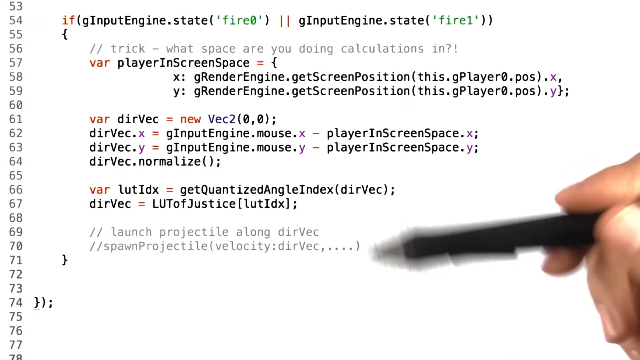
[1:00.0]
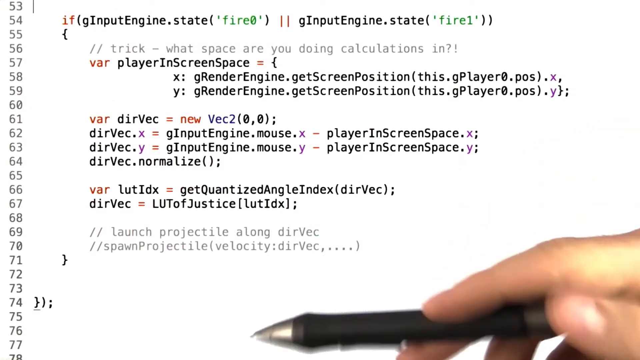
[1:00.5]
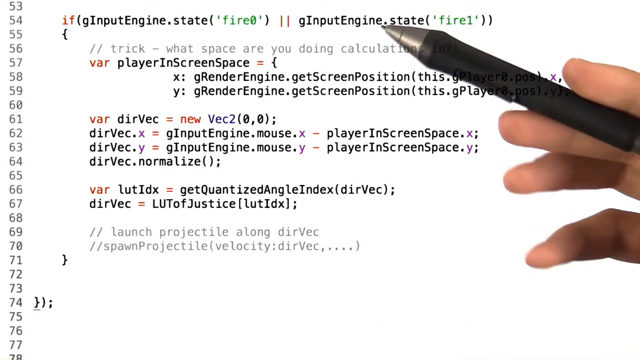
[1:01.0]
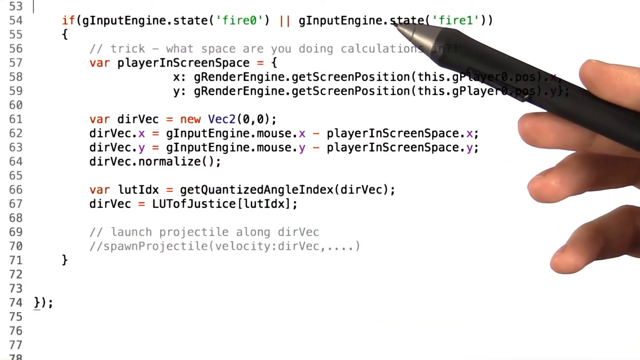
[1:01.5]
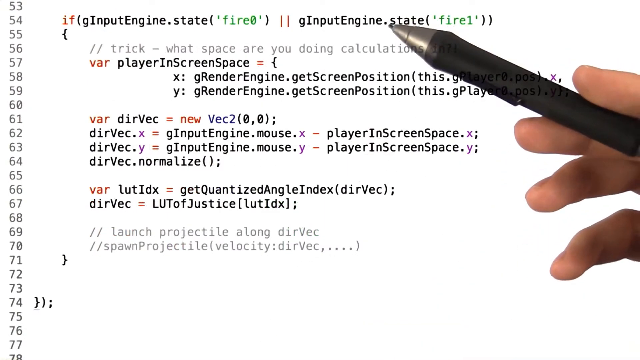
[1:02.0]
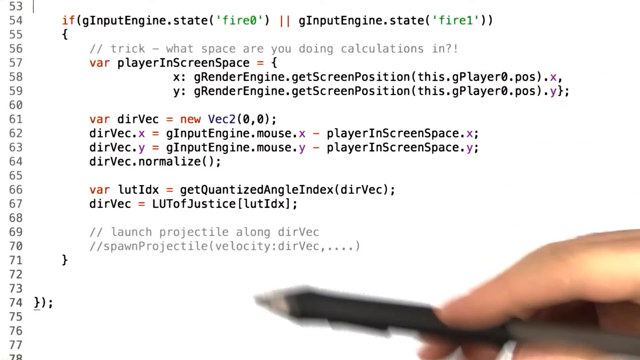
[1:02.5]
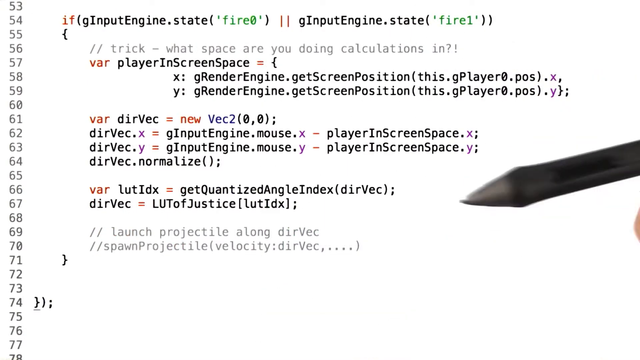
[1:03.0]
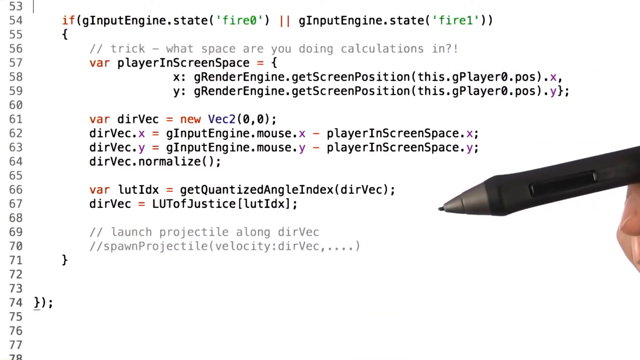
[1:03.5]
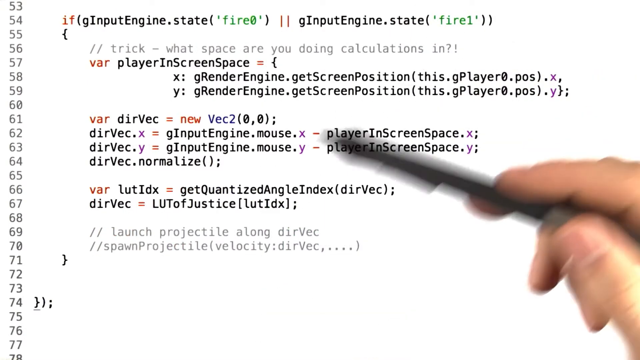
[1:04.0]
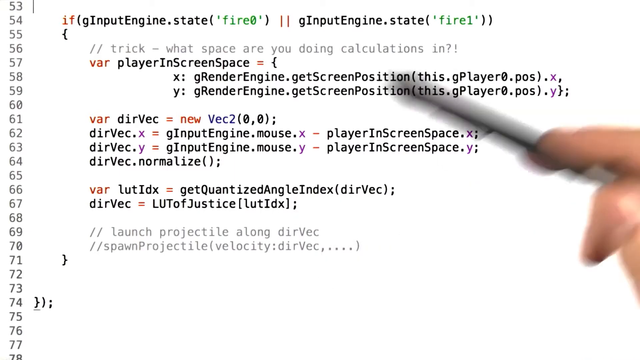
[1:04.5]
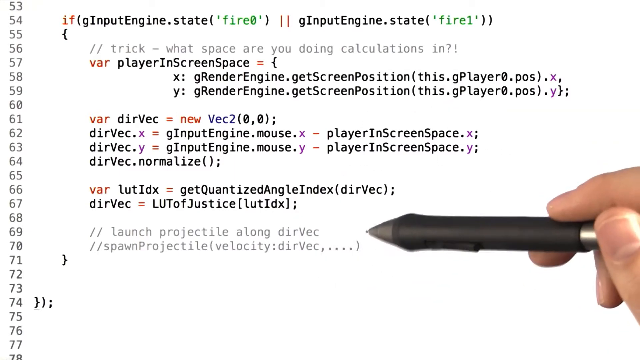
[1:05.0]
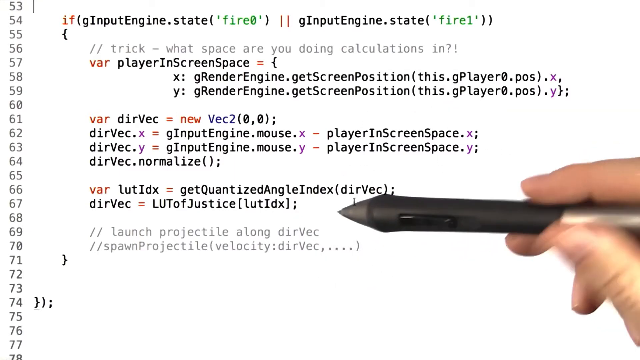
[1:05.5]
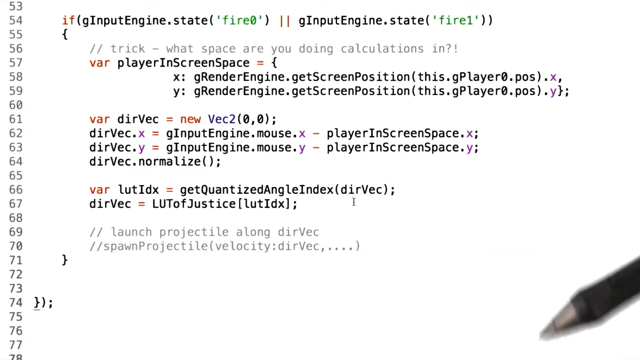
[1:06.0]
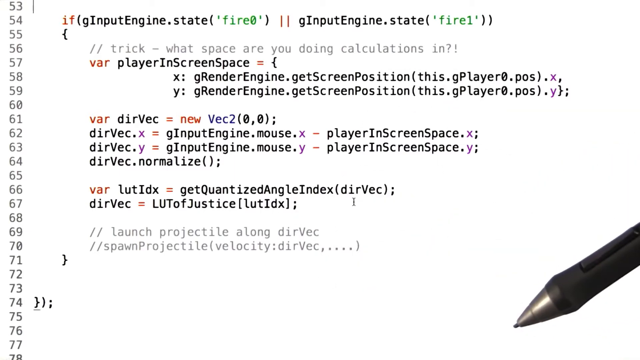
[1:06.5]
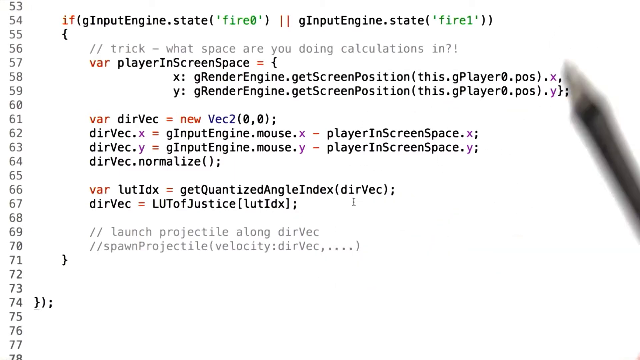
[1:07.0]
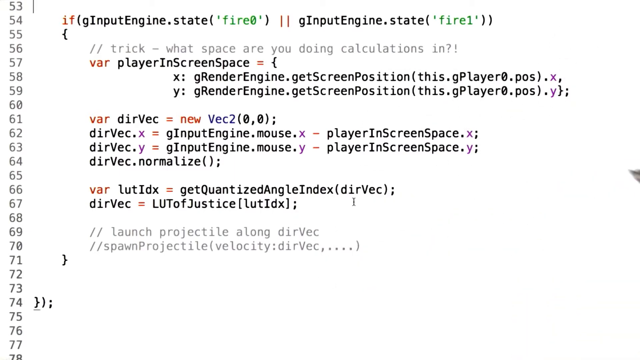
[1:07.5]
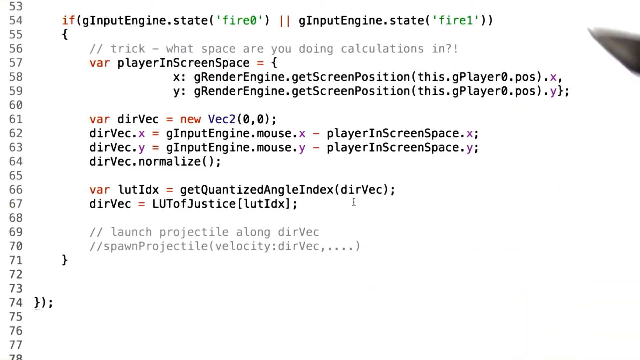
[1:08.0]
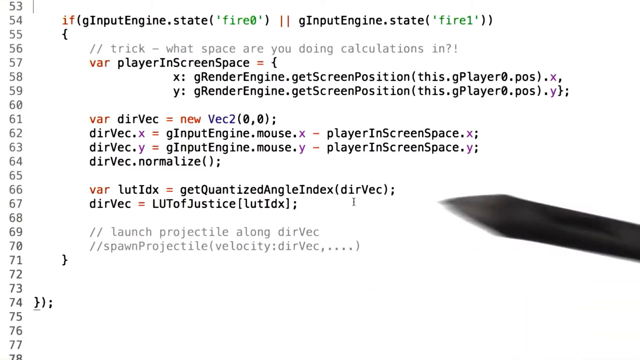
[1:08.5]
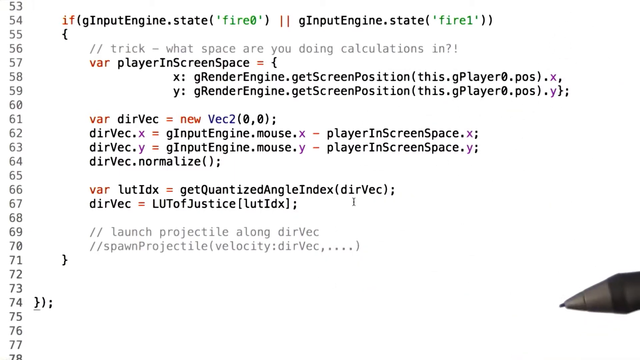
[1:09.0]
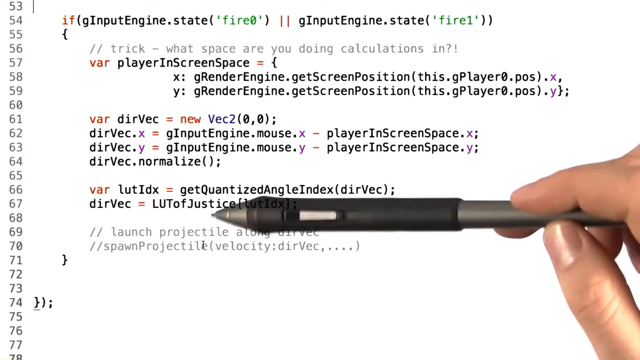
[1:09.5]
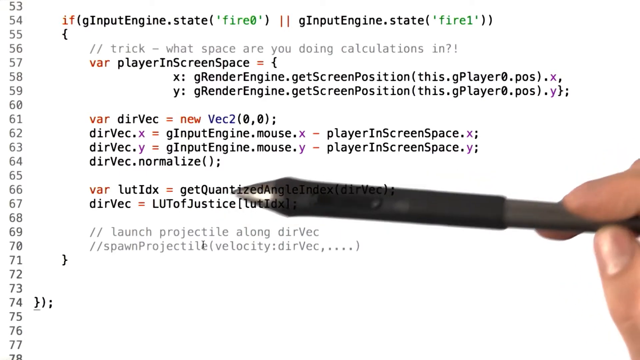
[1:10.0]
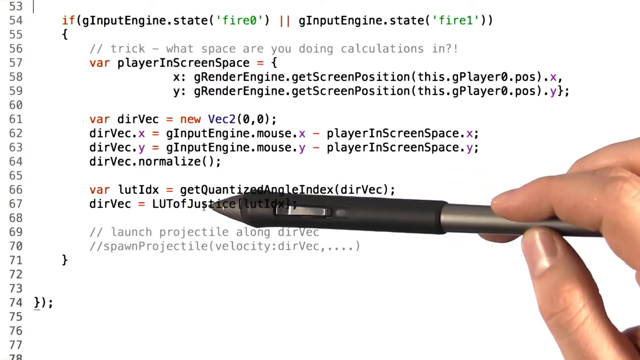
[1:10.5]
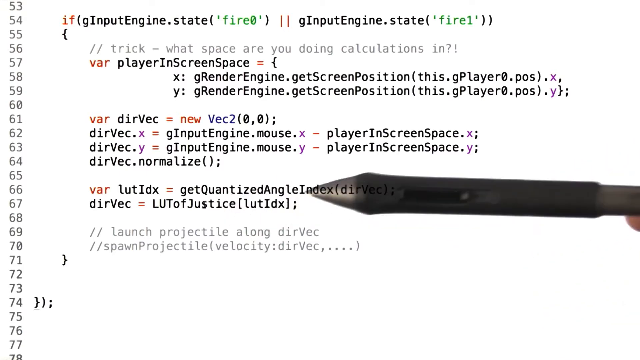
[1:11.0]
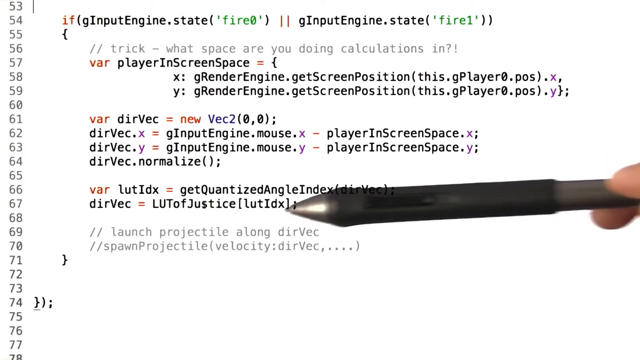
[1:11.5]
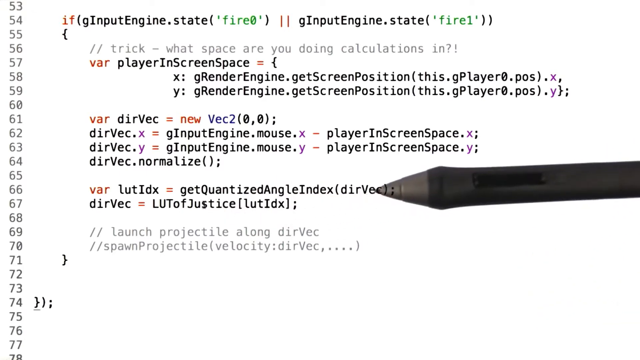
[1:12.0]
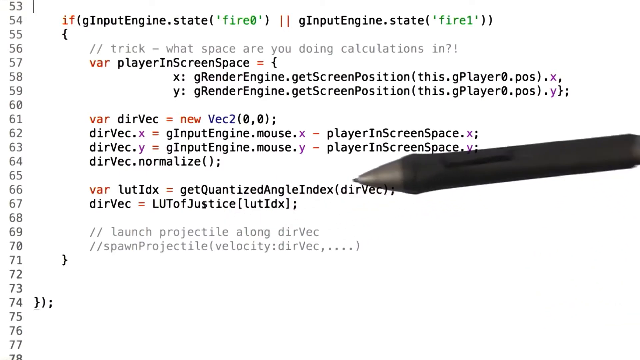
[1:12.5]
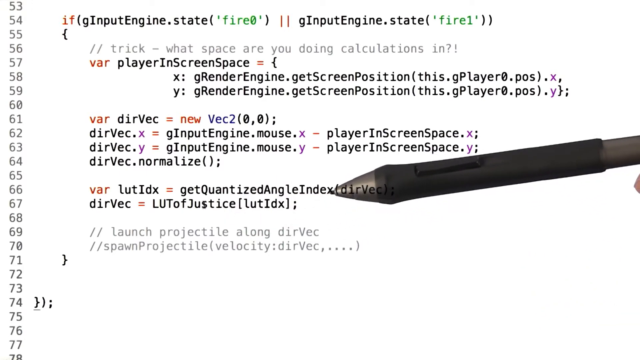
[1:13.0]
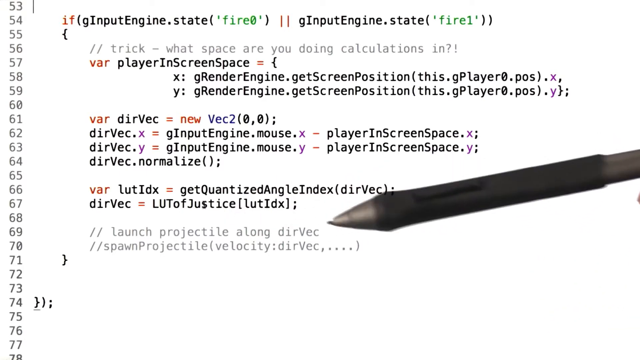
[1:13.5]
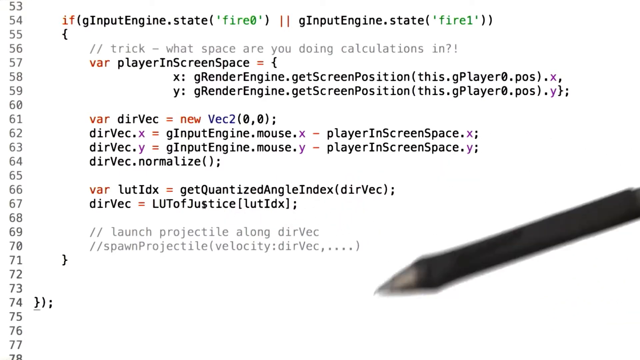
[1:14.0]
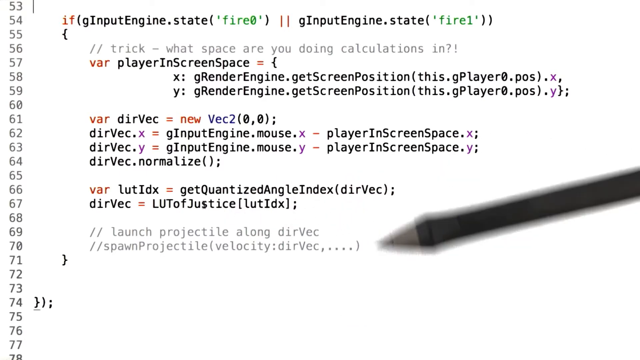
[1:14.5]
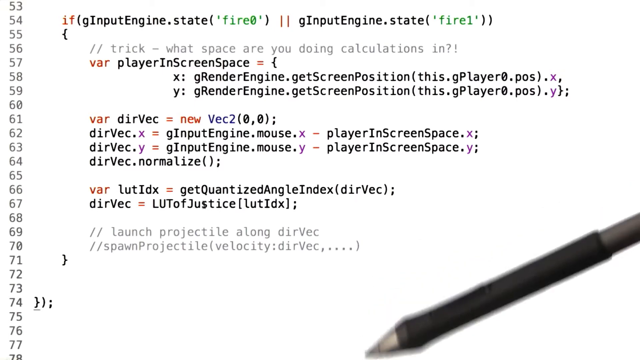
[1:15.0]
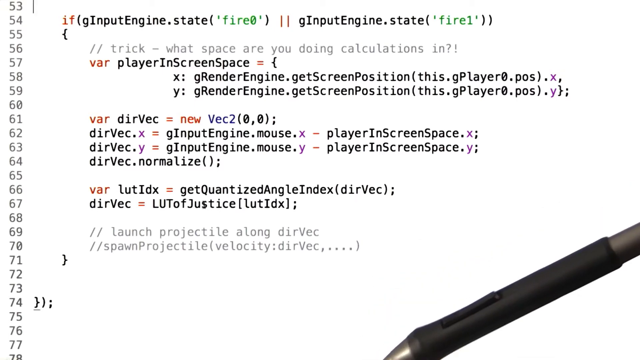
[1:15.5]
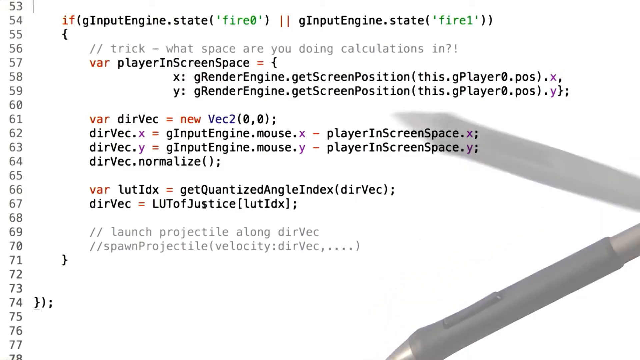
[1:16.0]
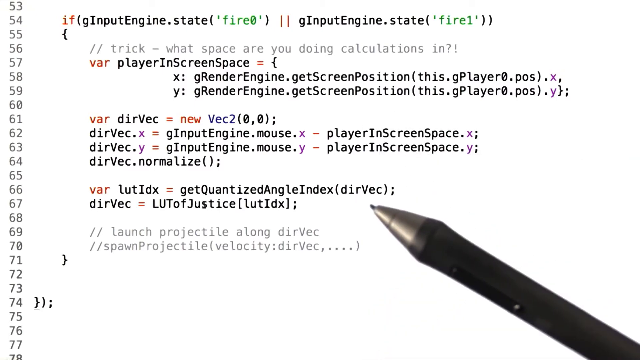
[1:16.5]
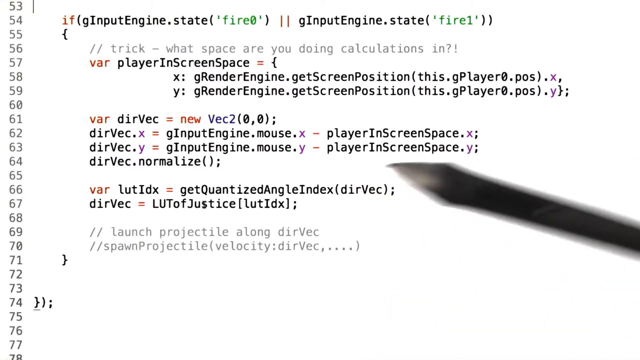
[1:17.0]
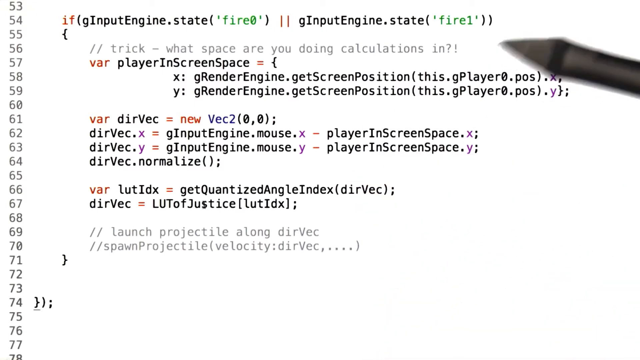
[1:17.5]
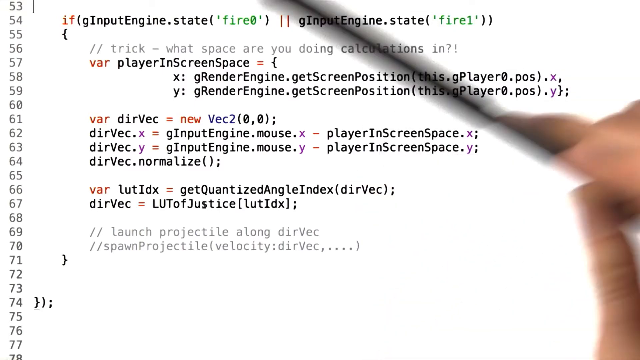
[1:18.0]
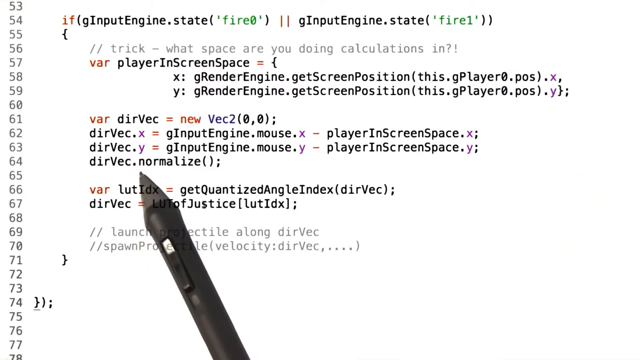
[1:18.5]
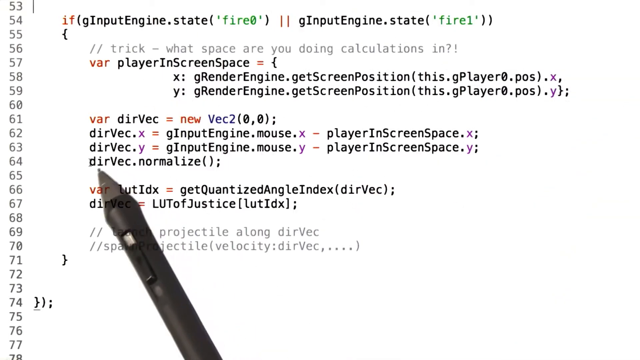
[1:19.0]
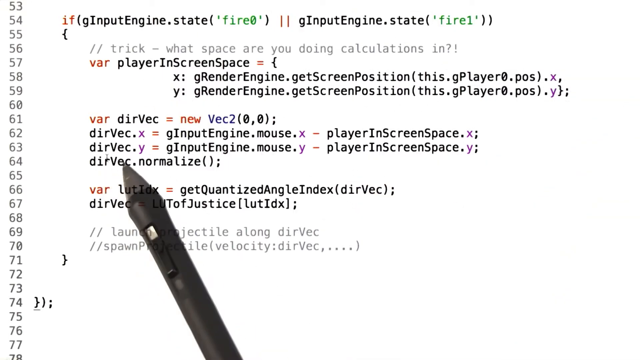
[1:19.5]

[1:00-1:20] A light-skinned Caucasian hand holding a mechanical pencil points quickly at different lines of code, with lines 53 through 74 on the screen. At the top, lines 53 and 54 check for input related to a mouse click mapped to fire 01 or fire 02. Line 56 has a label stating "trick what space are you doing calculation in?" and lines 57 through 67 are direct code. Lines 61 through 64 deal with calculating the mouse direction, while lines 66 through 67 are also related to directional values. Line 69 has descriptors stating "launch projectile along dir vec" and "spawn projectile velocity." The code is in black text with variables in red font, on a plain white notepad background.